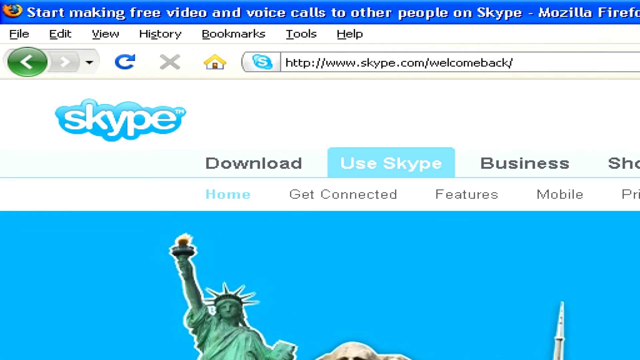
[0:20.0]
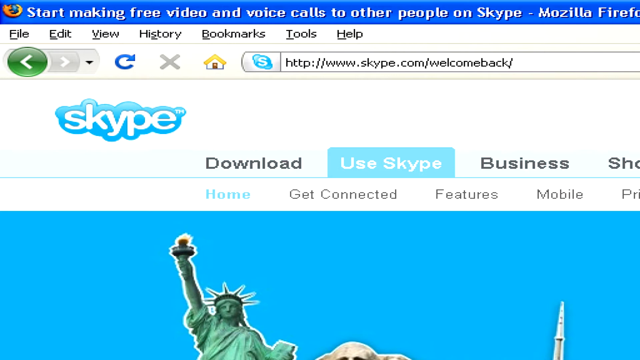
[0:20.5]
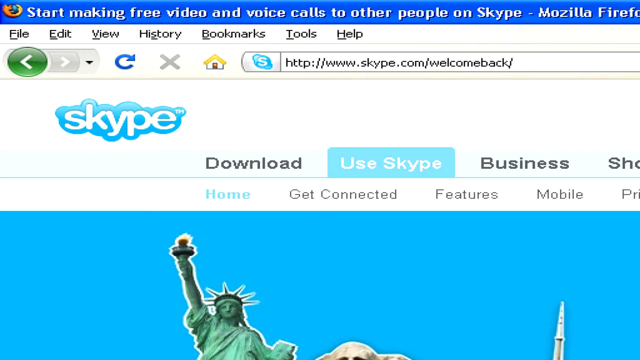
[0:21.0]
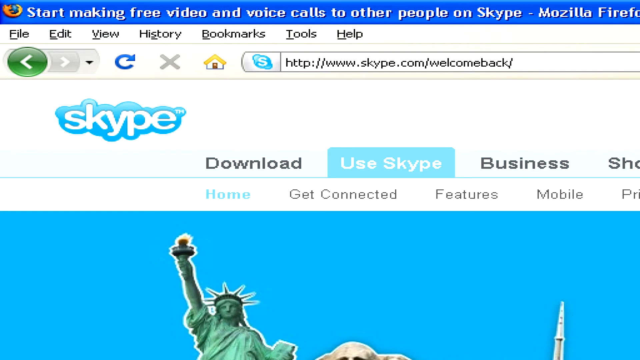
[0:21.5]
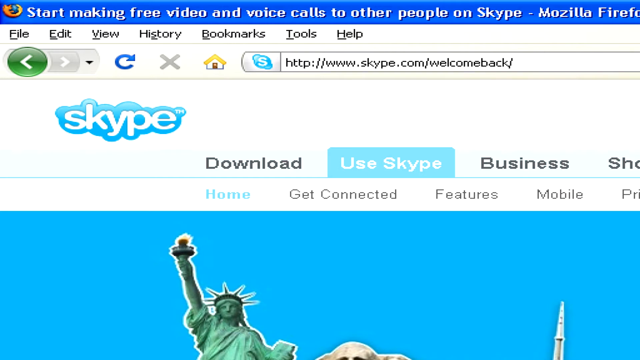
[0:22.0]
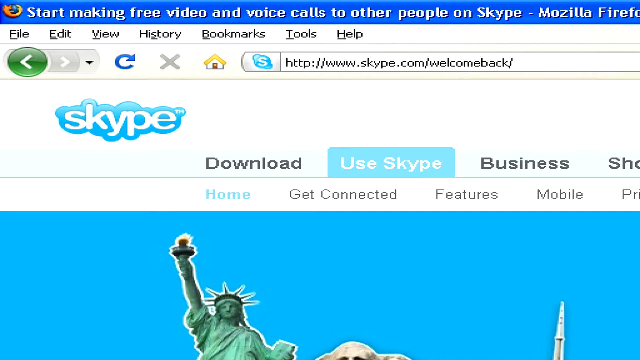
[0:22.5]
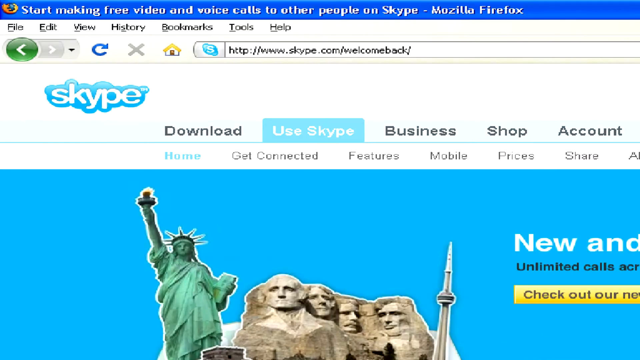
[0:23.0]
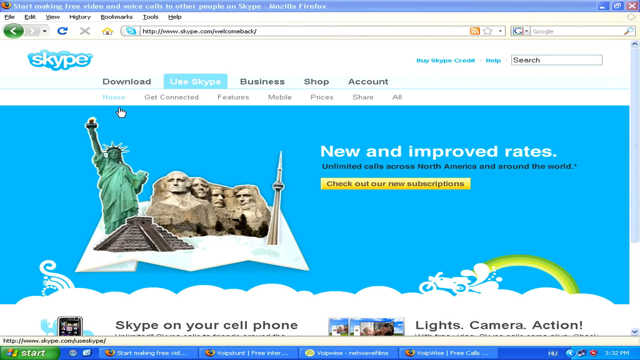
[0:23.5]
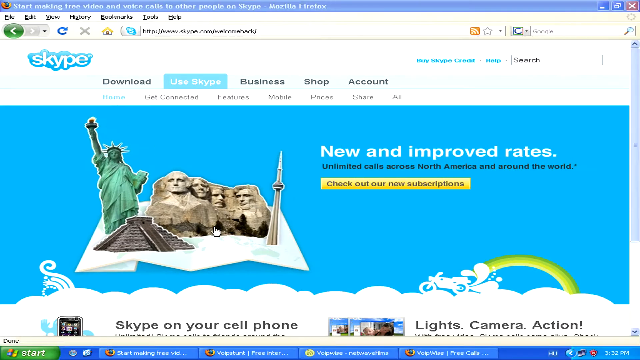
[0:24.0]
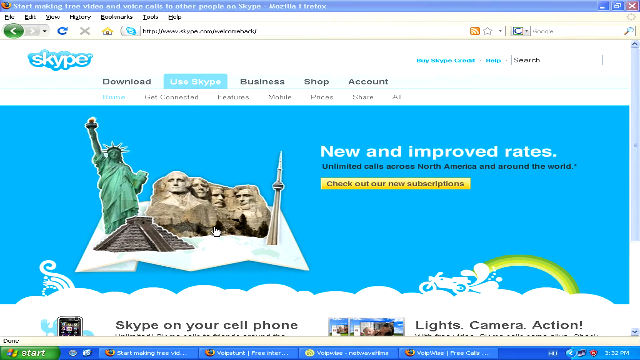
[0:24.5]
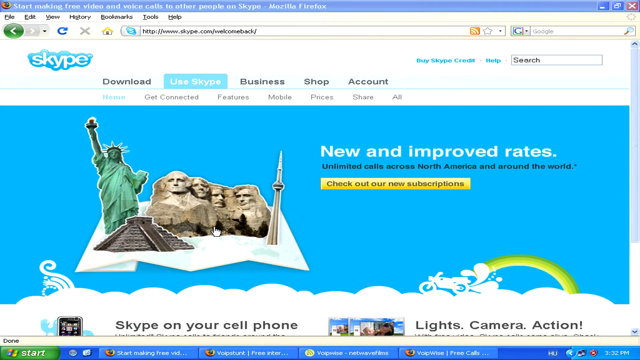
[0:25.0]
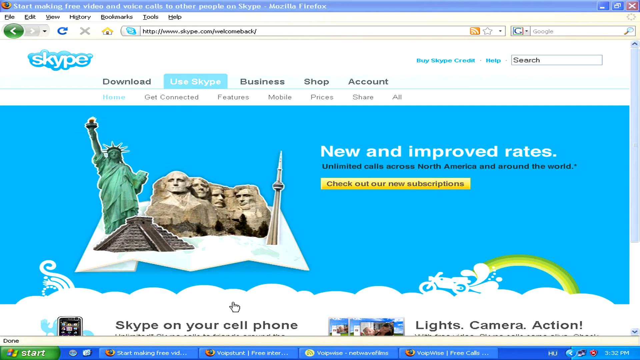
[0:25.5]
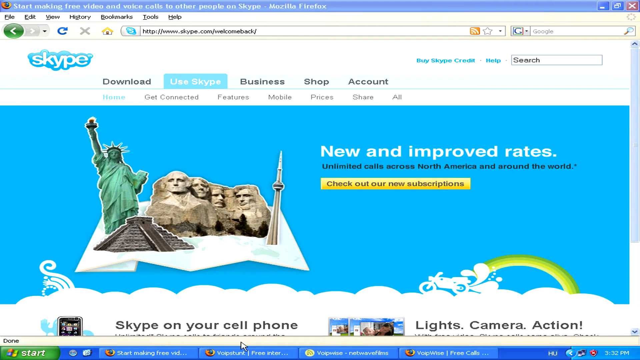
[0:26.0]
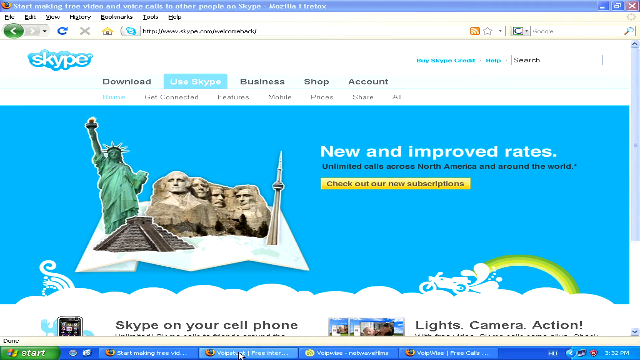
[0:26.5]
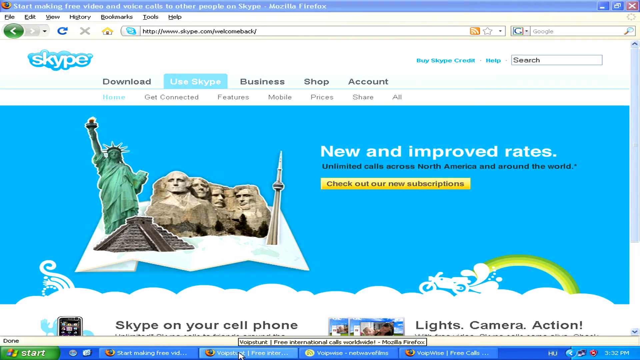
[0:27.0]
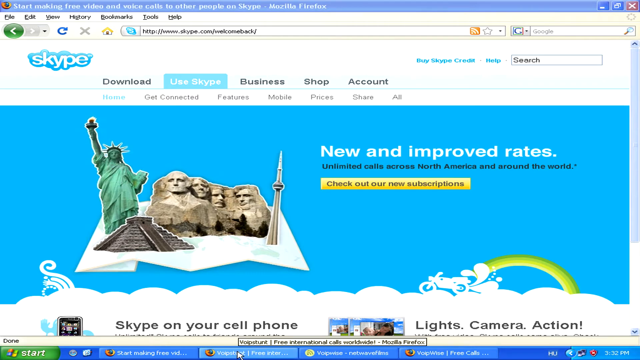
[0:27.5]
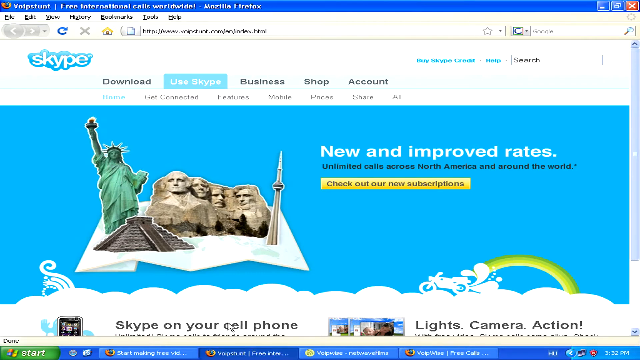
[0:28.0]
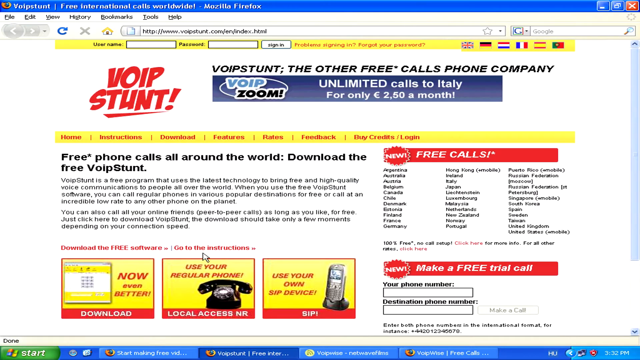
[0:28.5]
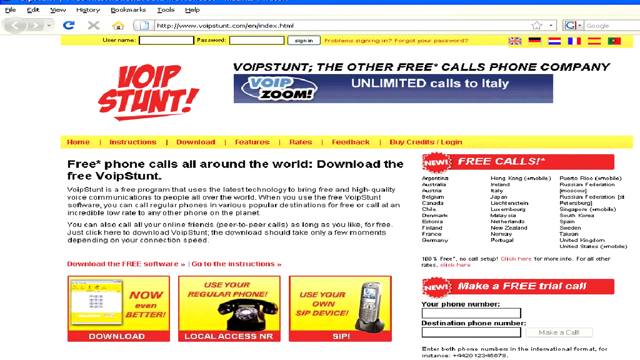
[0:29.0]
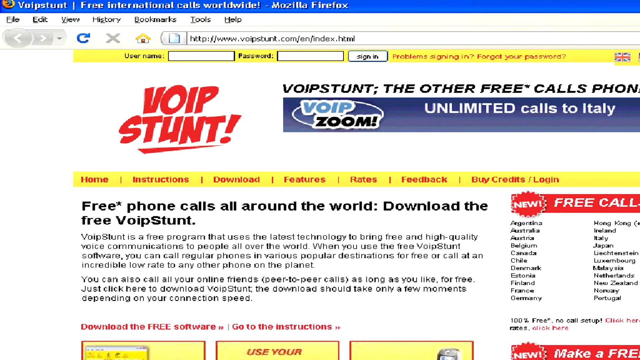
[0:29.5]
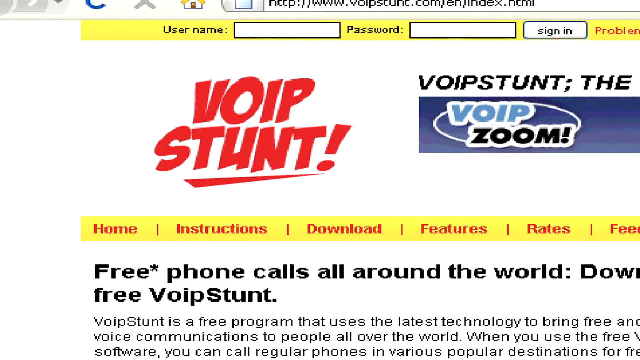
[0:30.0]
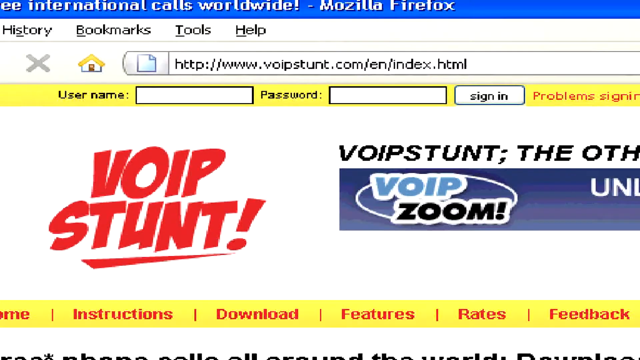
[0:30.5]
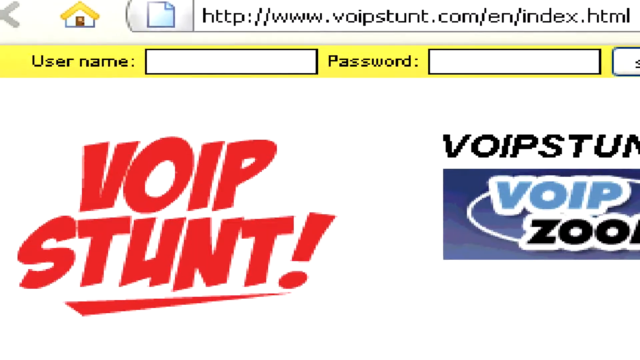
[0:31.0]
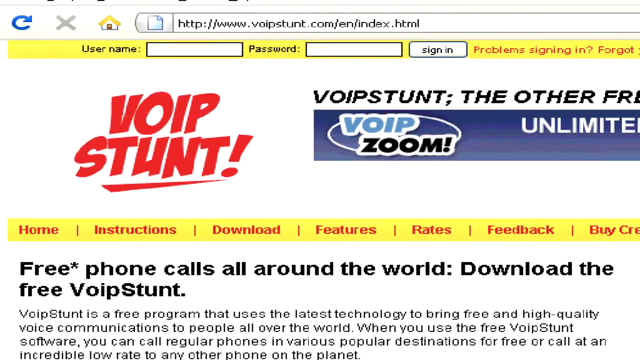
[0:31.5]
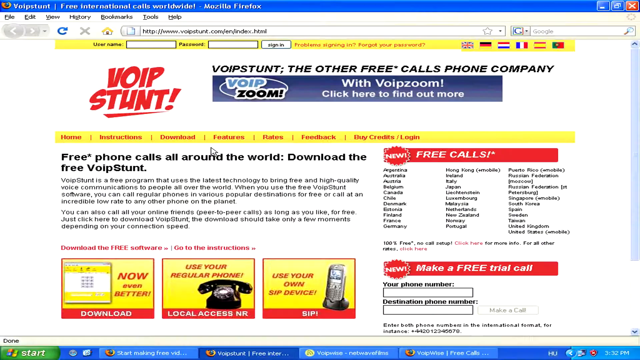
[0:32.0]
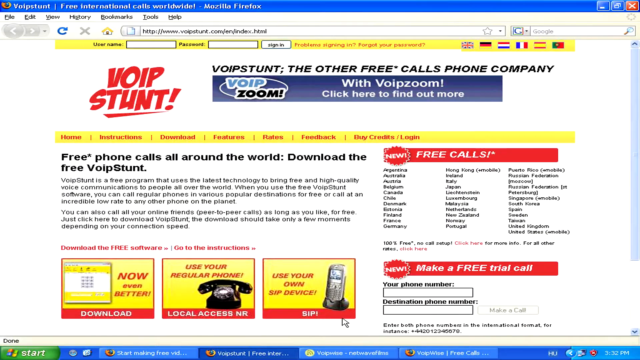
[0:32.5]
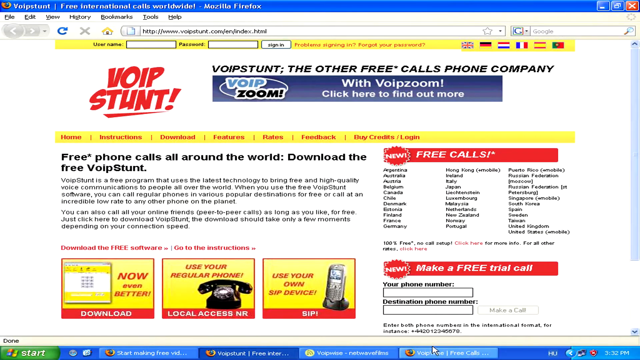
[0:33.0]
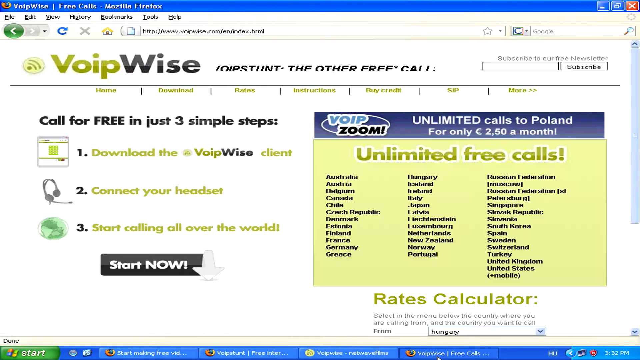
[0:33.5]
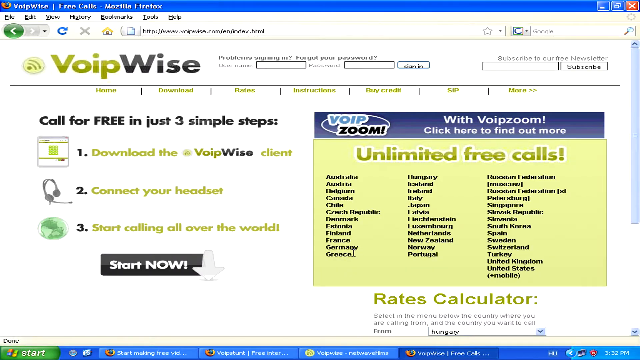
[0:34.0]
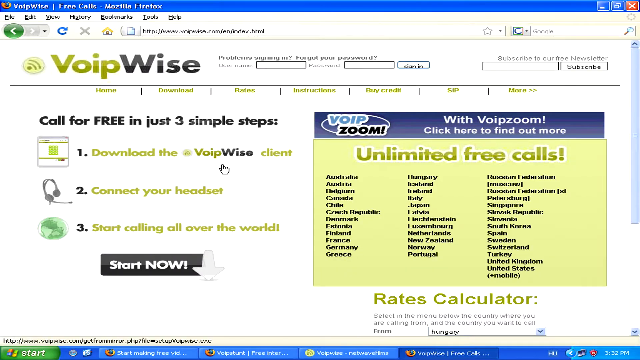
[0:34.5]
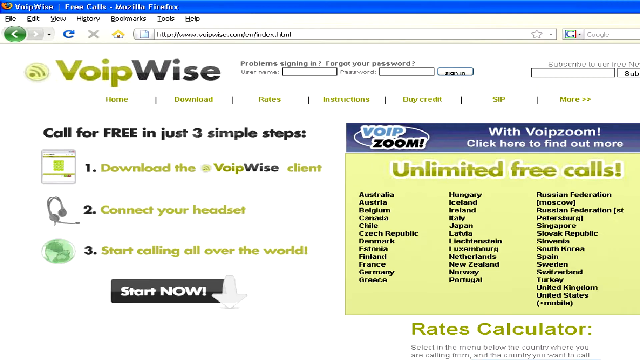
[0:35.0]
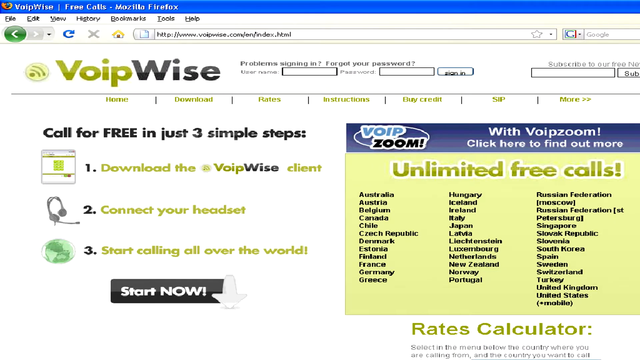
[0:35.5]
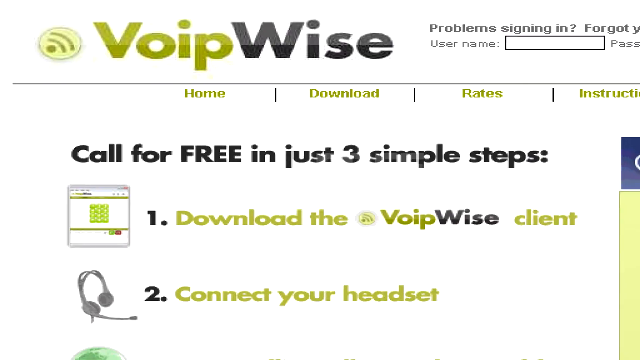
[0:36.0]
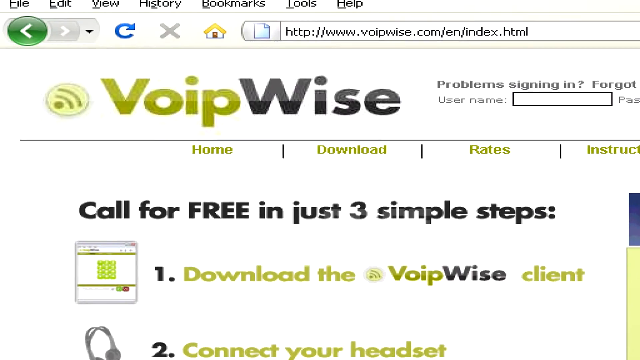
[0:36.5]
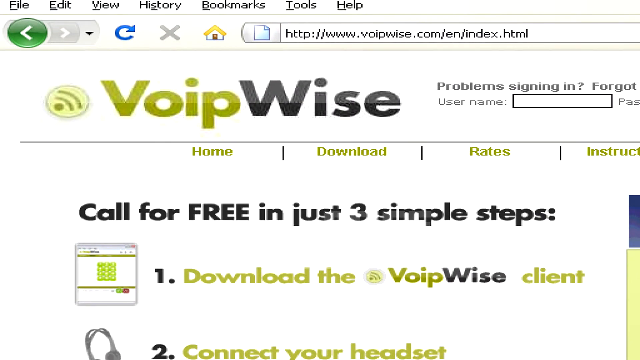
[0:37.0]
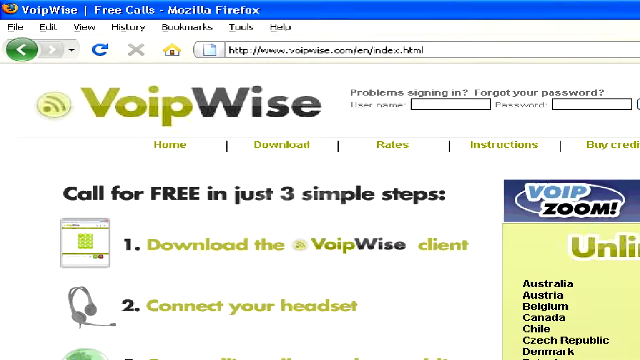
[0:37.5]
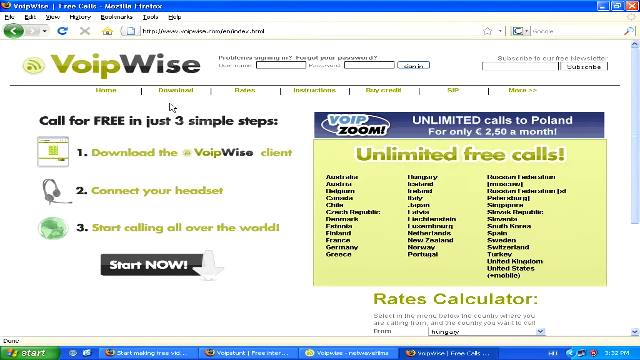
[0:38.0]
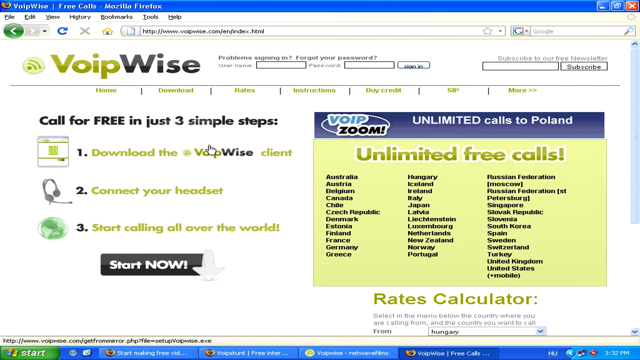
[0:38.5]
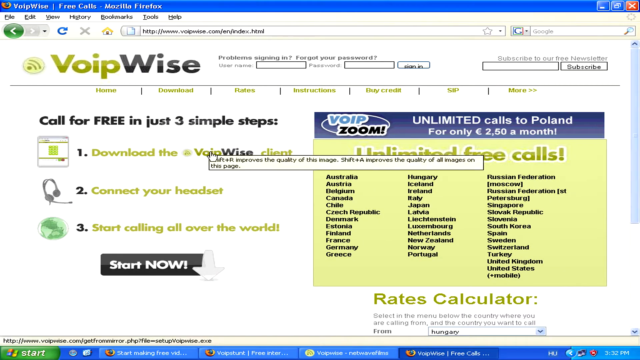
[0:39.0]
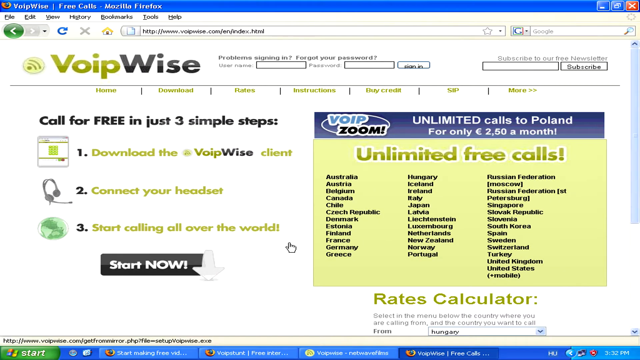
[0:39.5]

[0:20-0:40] The man apparently continues trying to set up a Skype account and link it to a VoIP service that offers a free number and free unlimited online calls. He seems to be trying to download the VoIP software.